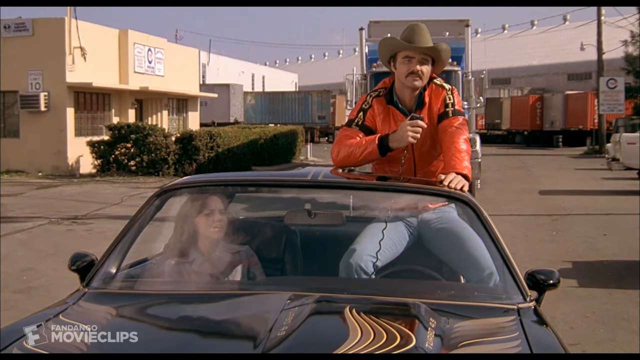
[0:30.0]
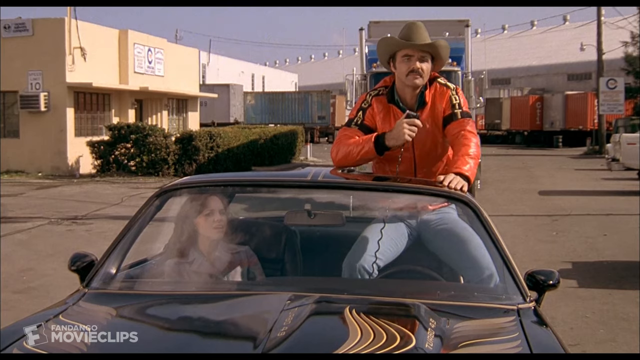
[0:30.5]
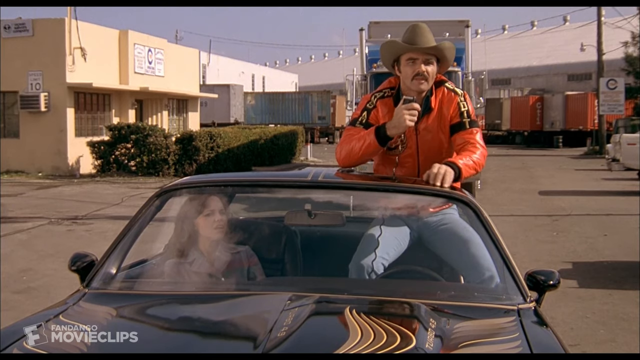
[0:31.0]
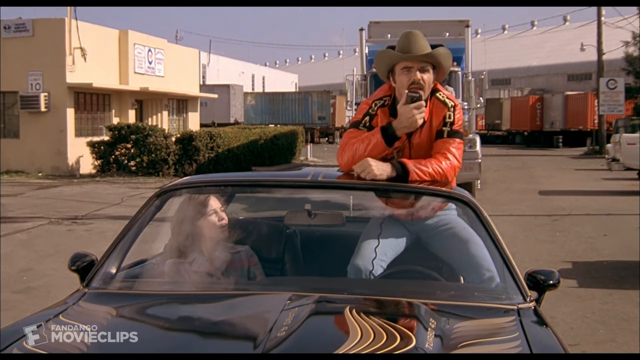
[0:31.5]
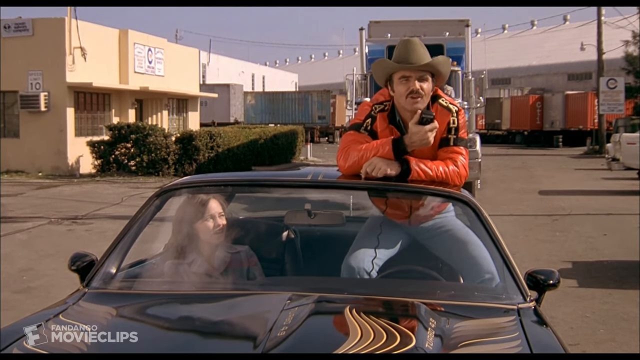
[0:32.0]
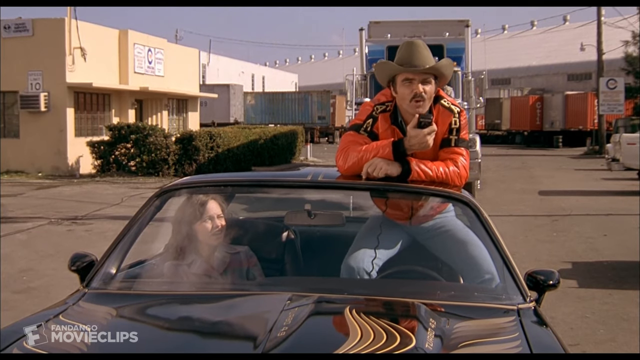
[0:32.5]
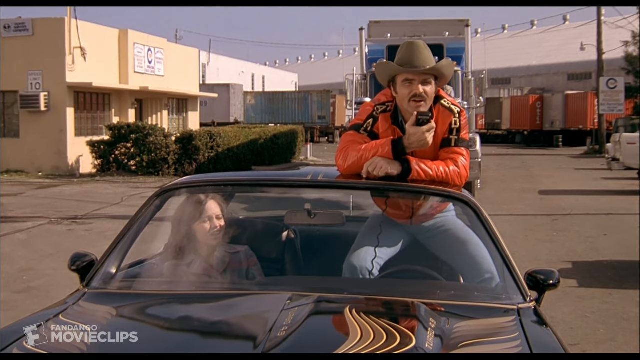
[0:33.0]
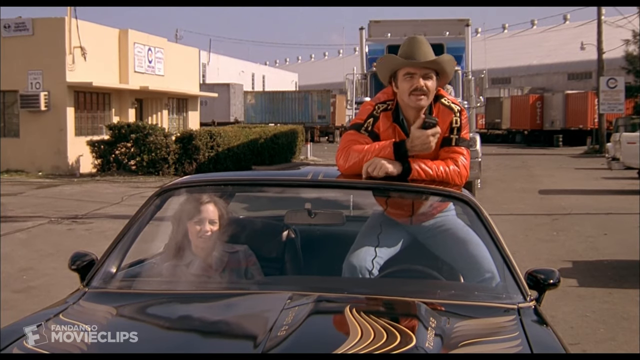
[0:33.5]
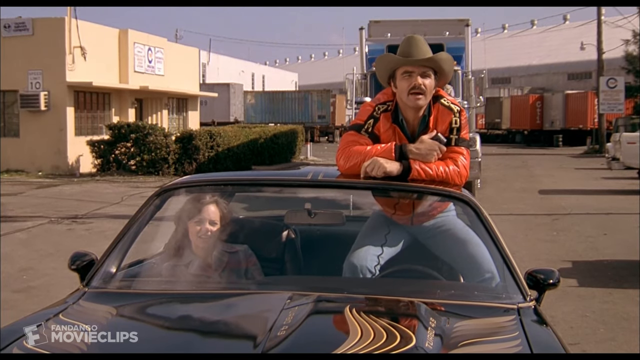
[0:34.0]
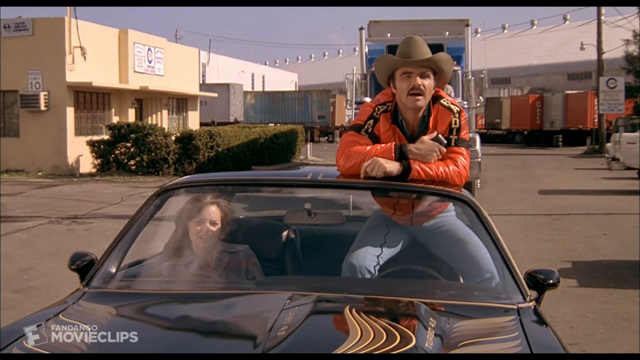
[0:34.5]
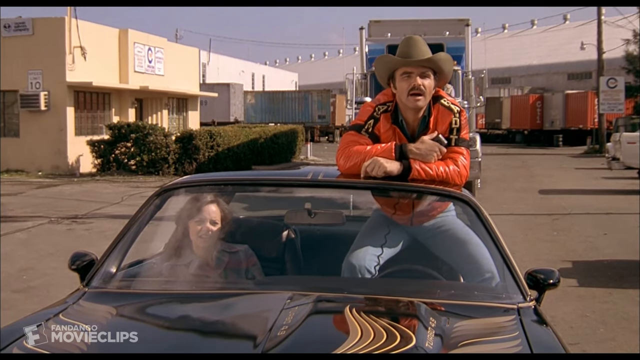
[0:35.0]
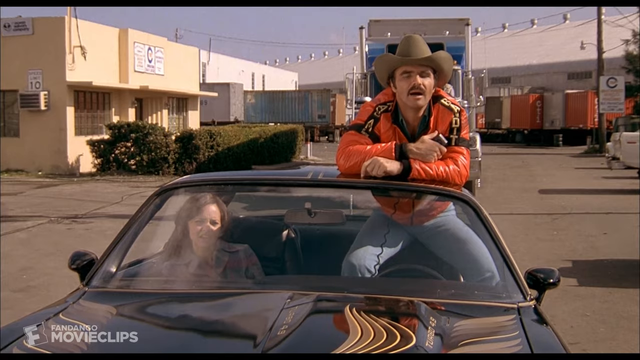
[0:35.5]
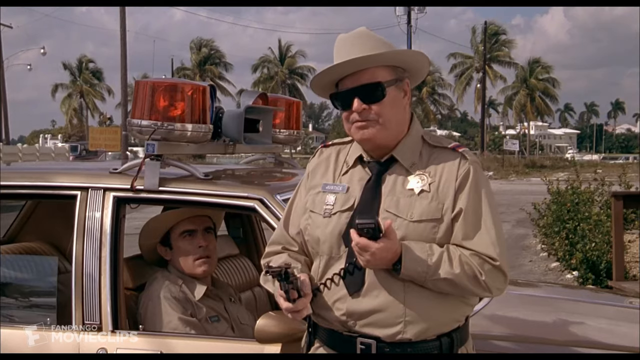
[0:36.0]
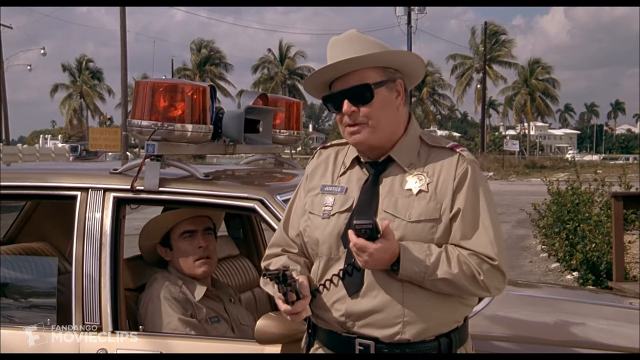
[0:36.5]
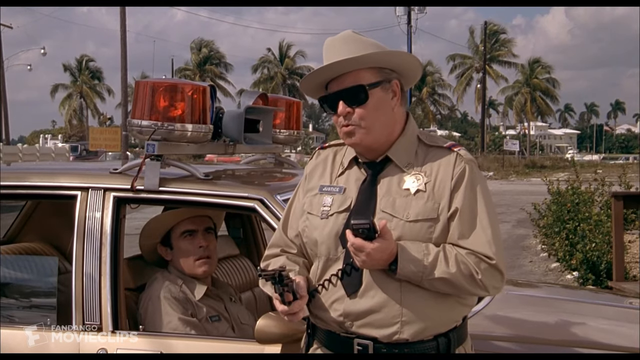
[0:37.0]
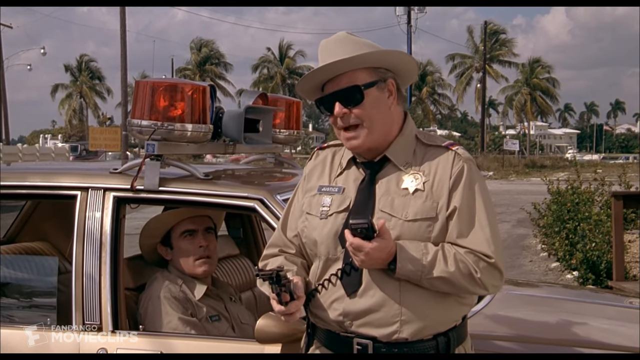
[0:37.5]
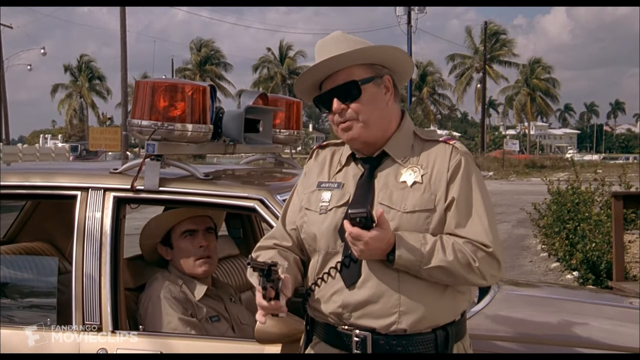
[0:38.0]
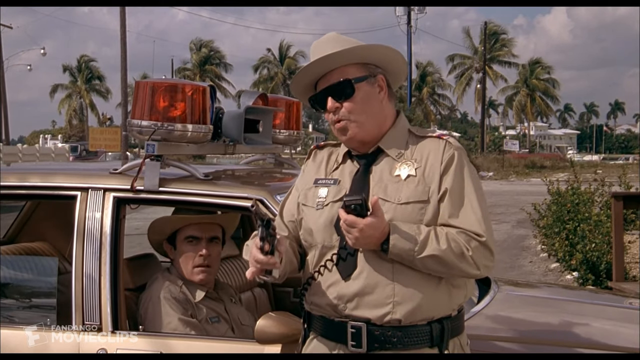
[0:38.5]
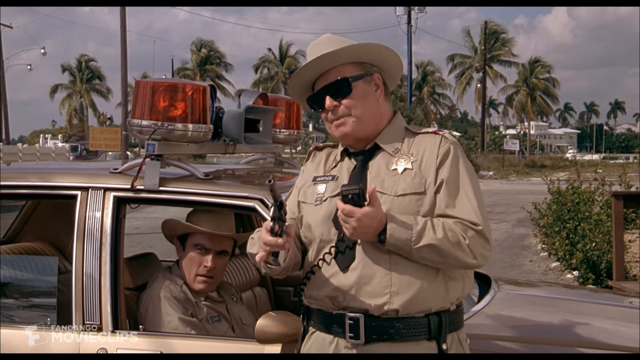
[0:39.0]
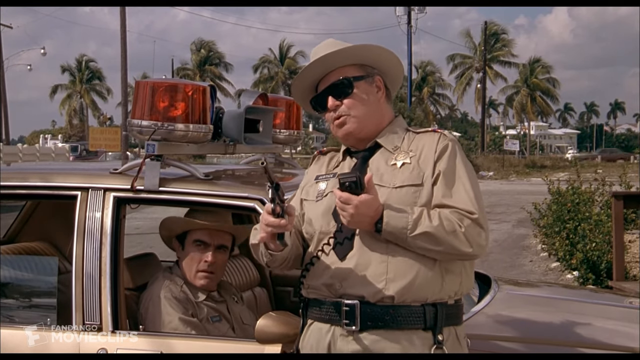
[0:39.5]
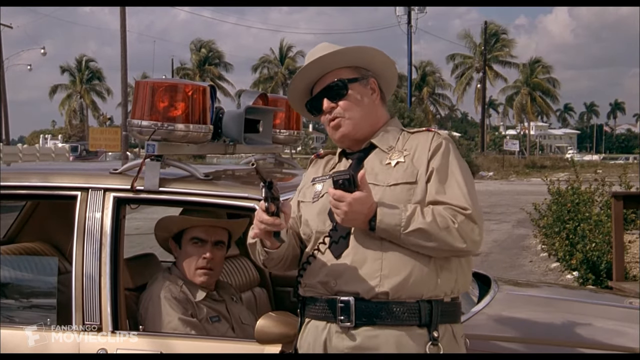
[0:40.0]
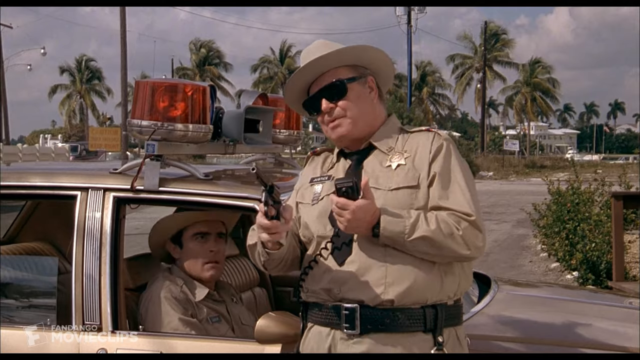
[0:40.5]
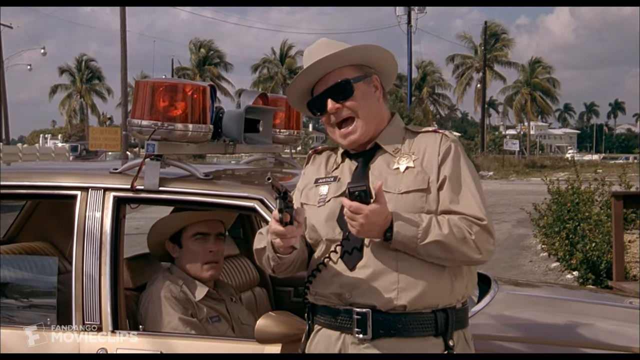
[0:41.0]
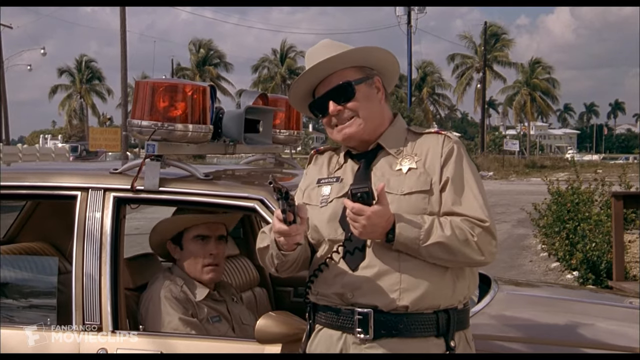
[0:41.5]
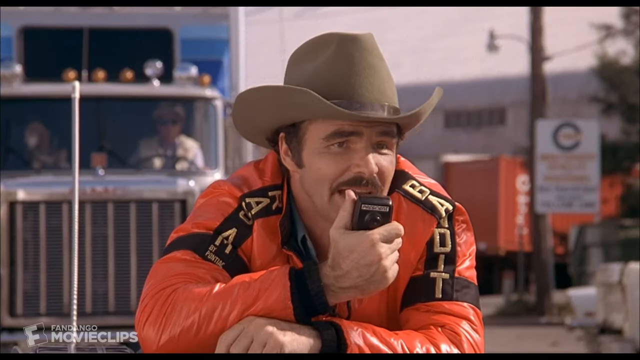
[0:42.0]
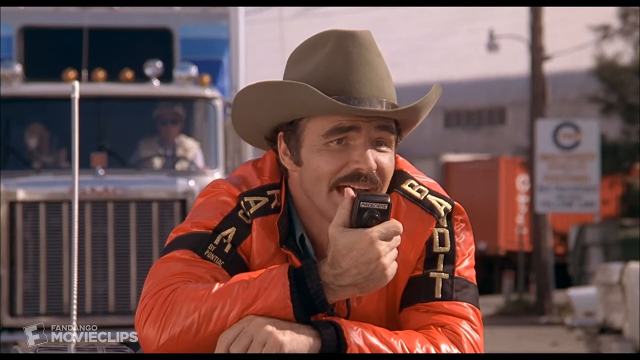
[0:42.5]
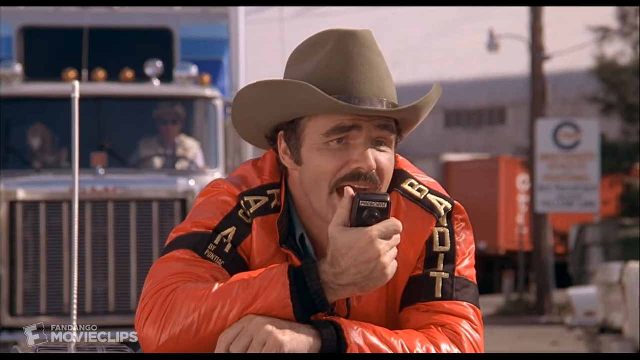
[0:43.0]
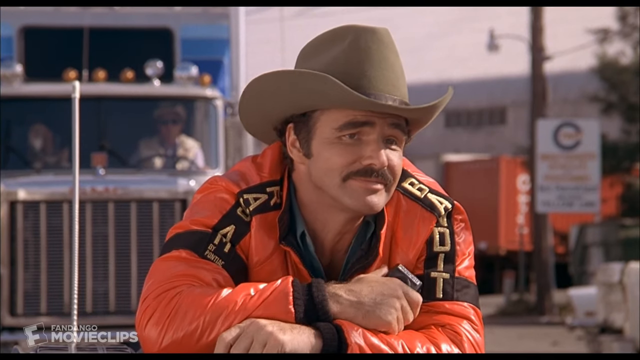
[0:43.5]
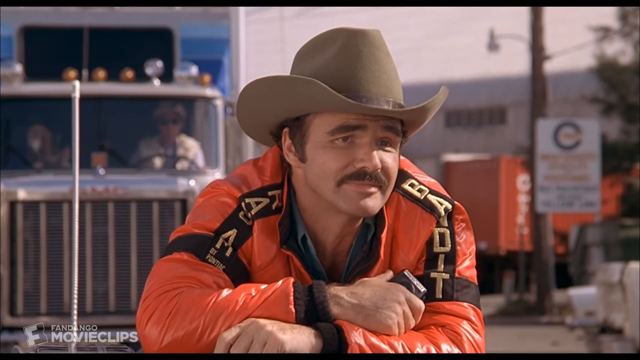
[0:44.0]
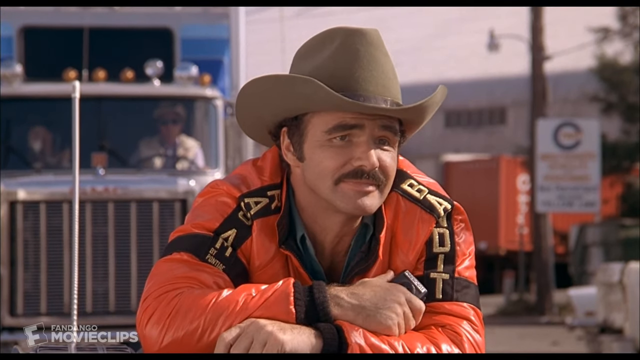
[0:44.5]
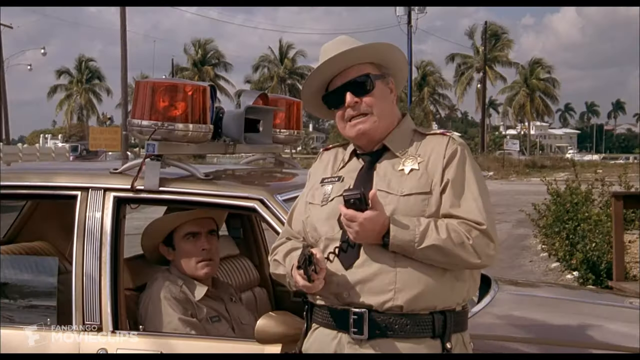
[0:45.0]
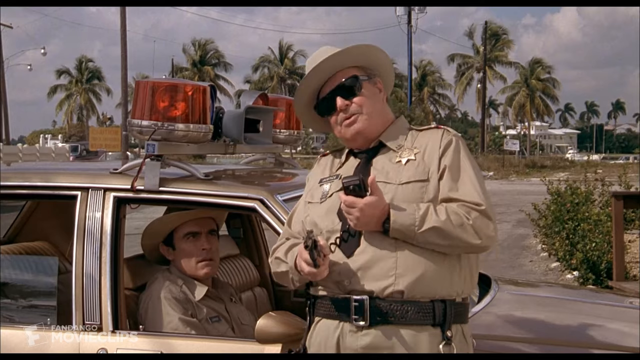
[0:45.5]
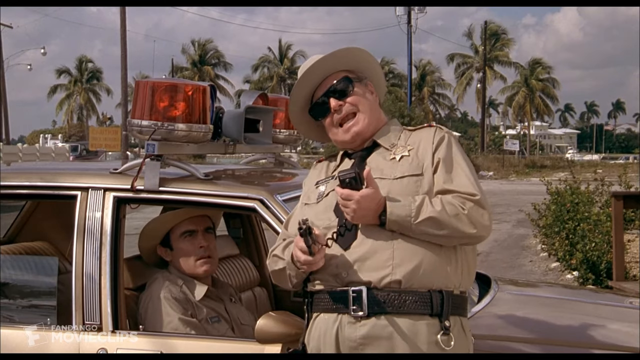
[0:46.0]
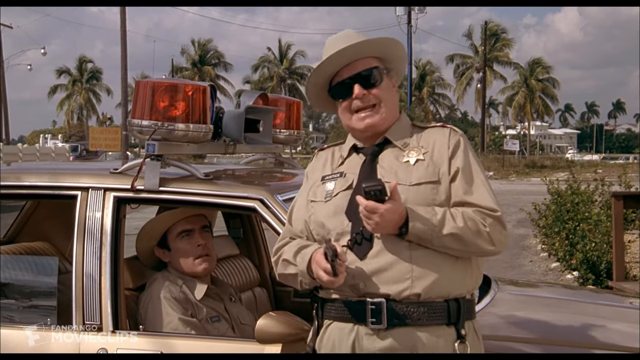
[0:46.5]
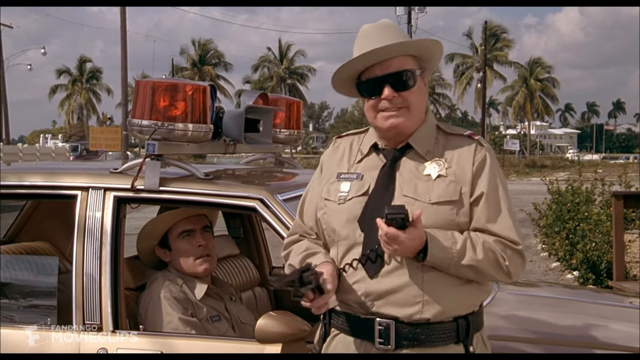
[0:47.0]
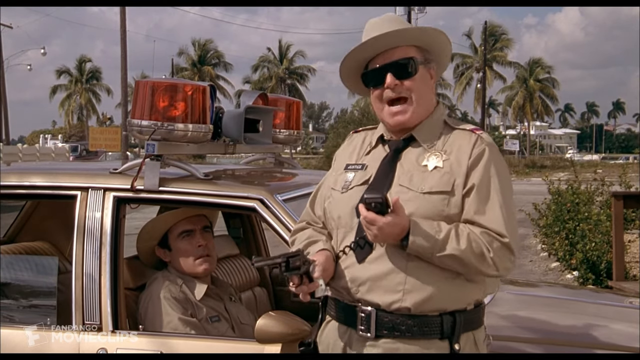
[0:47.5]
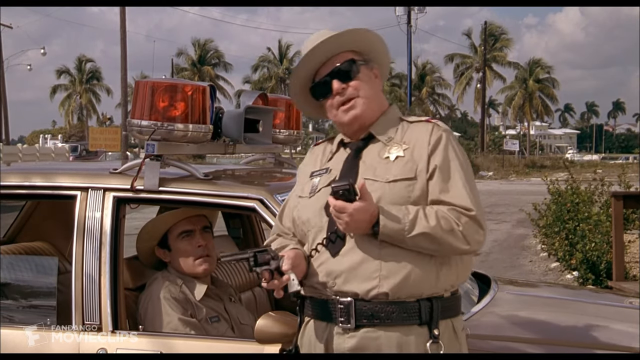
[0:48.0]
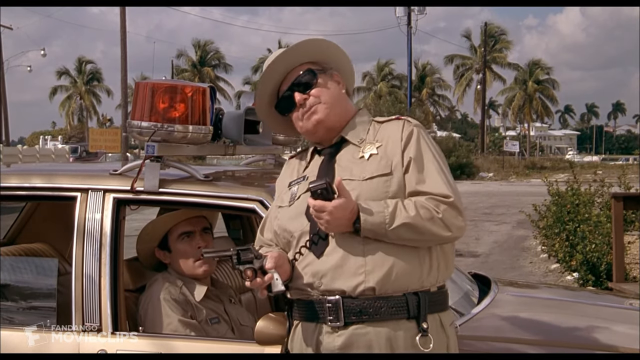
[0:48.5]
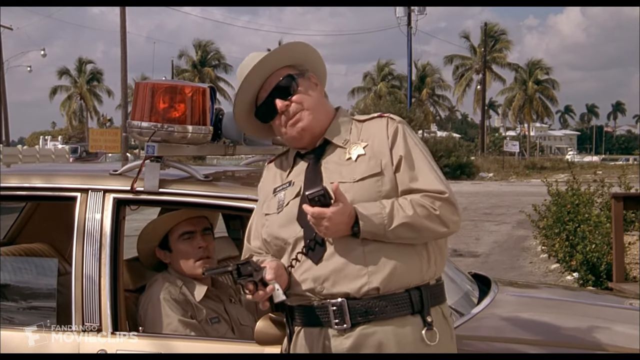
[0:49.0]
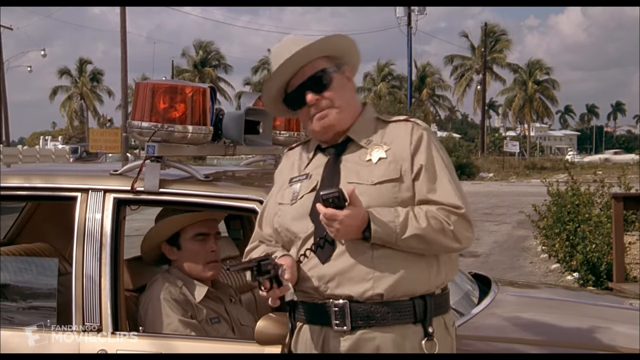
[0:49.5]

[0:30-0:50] The man gets back on the car, his left arm in front and his right arm on top of his left foot, and calmly starts talking to the policeman across the street. The policeman then talks to his colleague inside the police car. He points his revolver at the person in the other car and gives a sarcastic laugh.